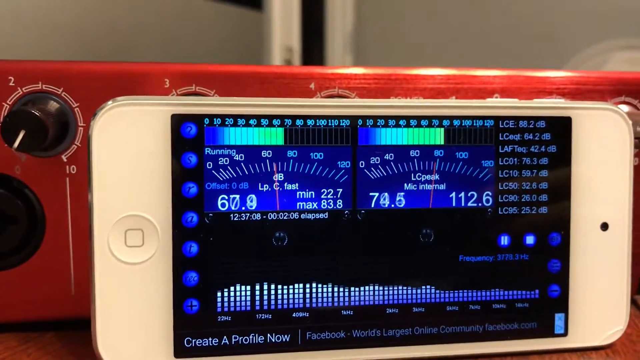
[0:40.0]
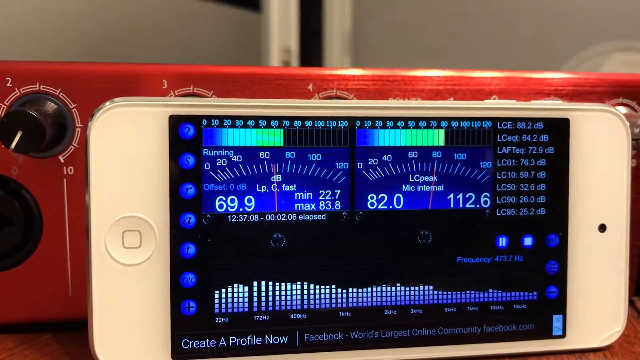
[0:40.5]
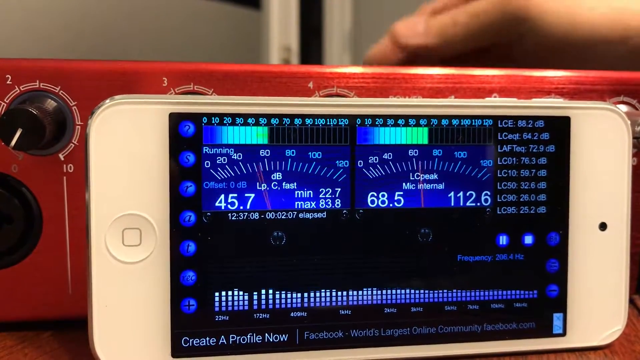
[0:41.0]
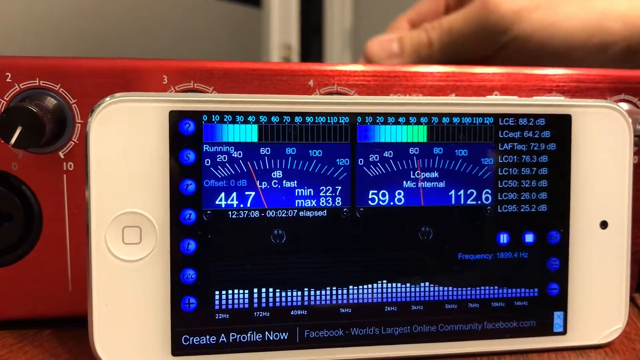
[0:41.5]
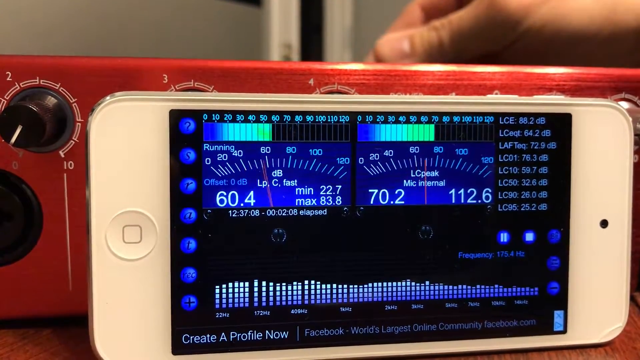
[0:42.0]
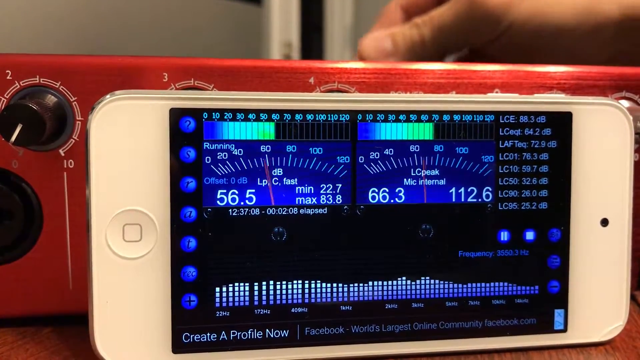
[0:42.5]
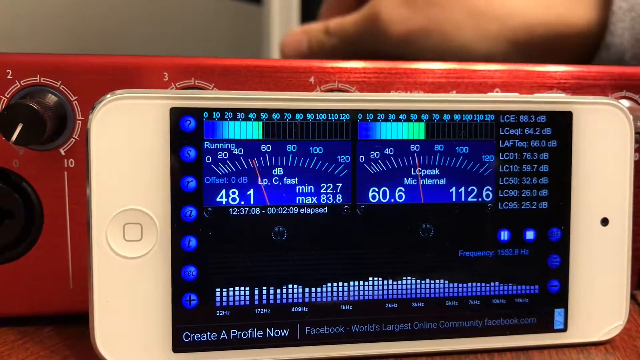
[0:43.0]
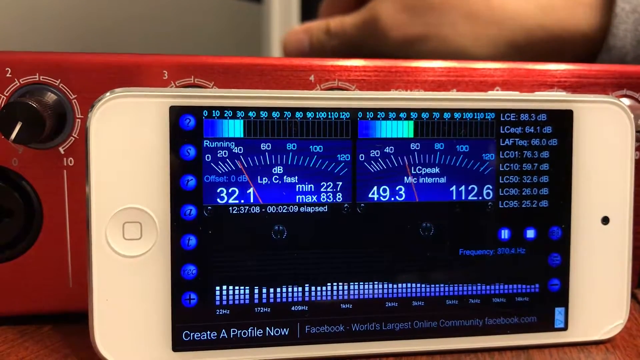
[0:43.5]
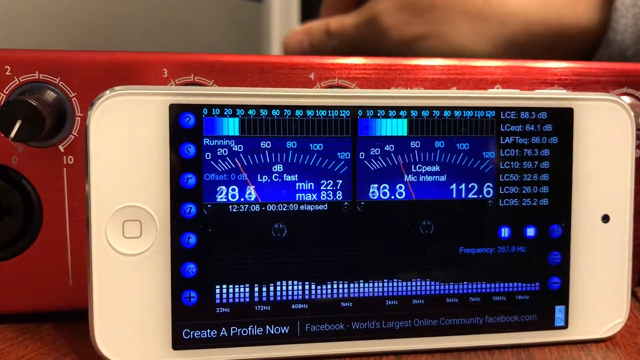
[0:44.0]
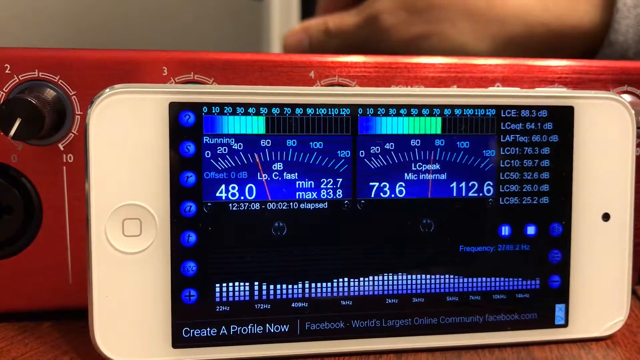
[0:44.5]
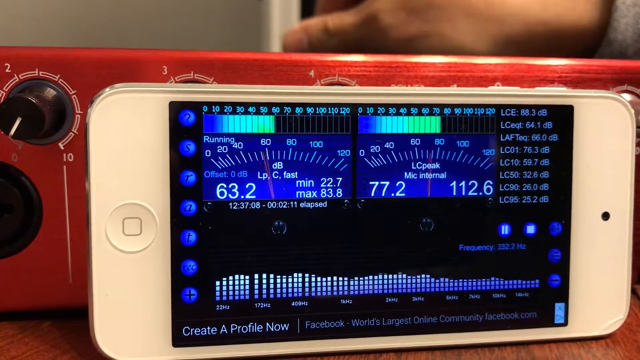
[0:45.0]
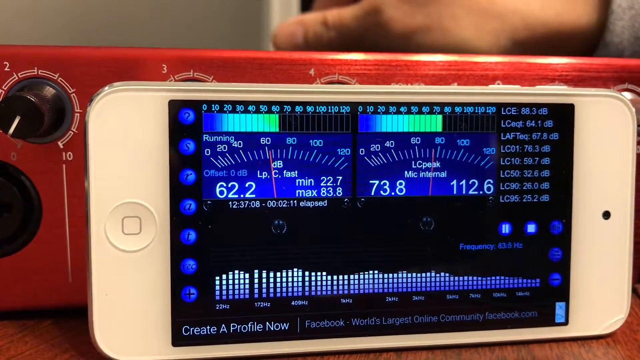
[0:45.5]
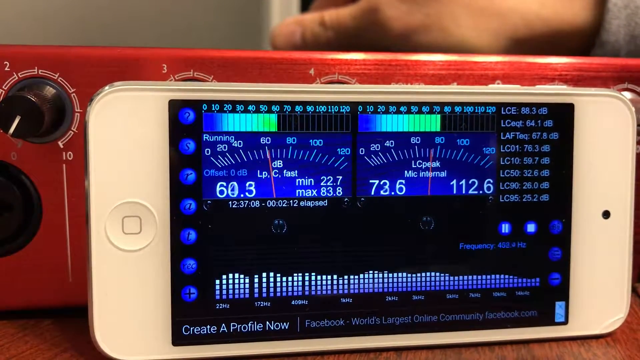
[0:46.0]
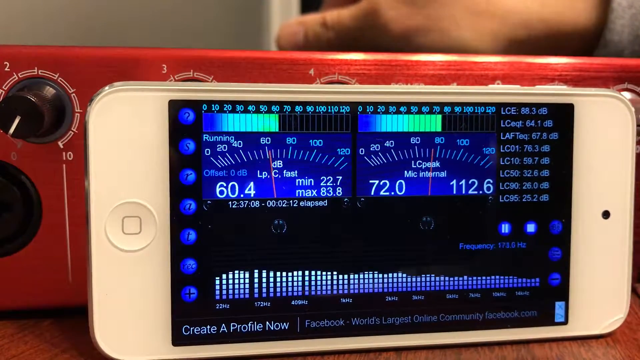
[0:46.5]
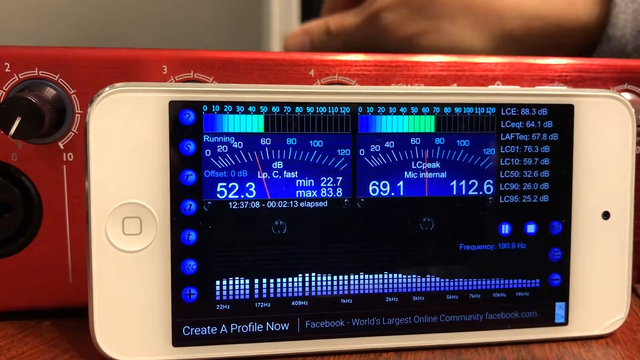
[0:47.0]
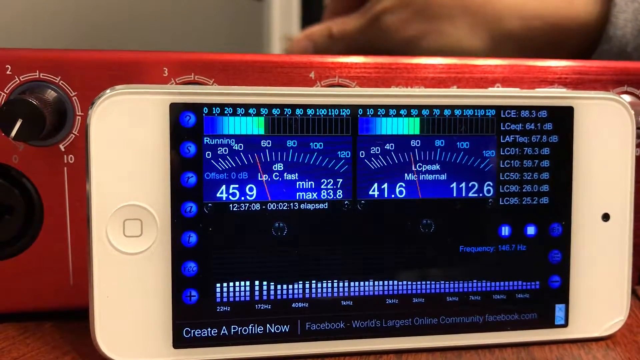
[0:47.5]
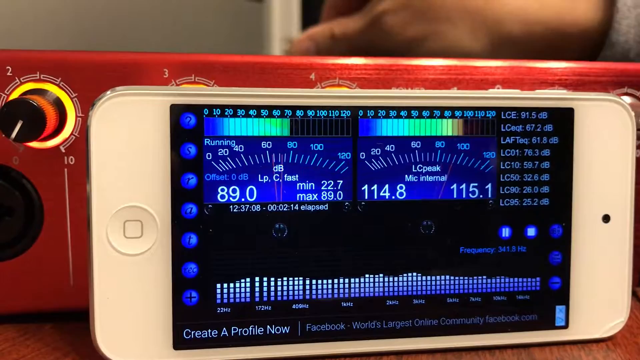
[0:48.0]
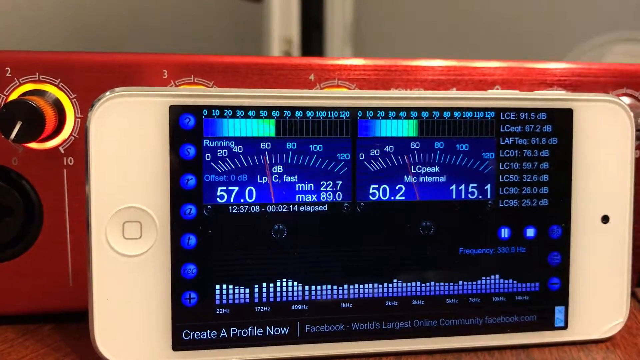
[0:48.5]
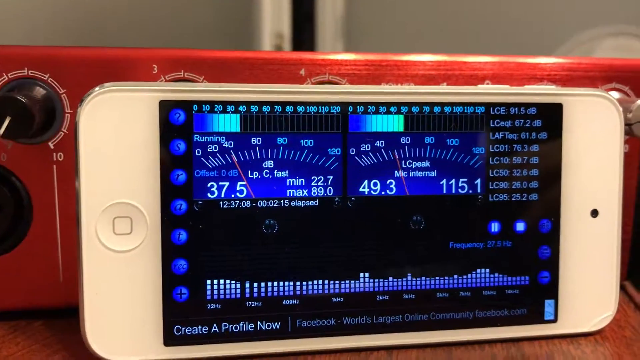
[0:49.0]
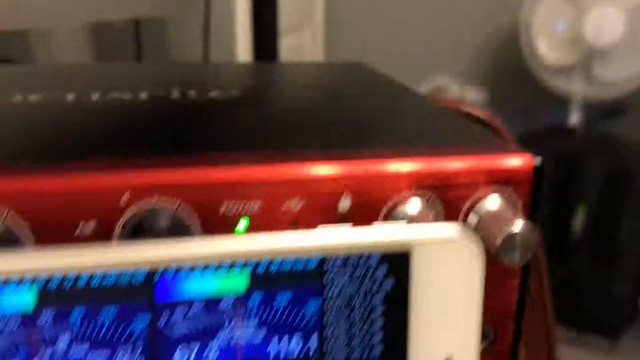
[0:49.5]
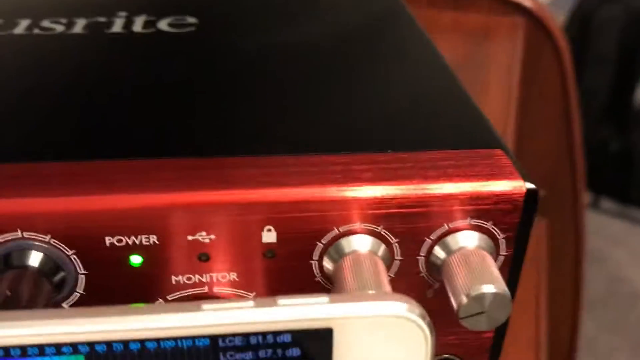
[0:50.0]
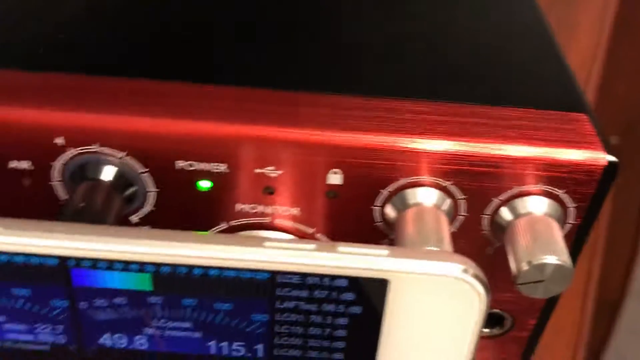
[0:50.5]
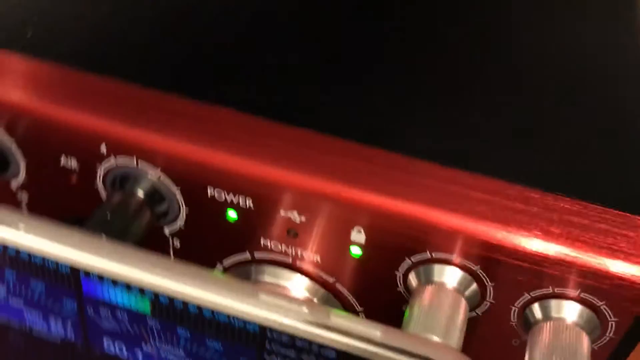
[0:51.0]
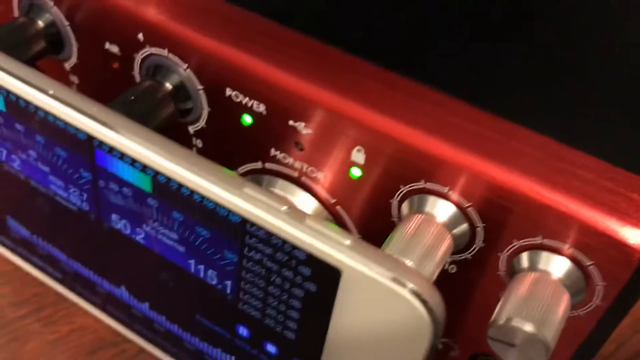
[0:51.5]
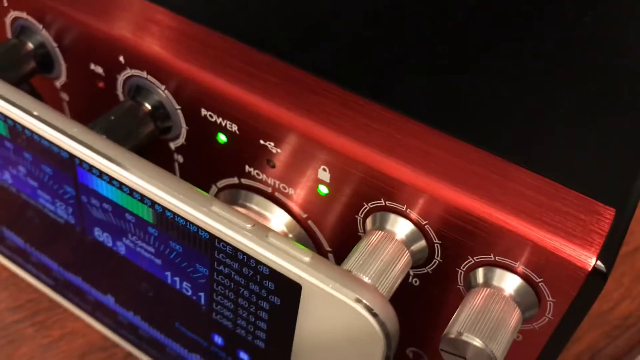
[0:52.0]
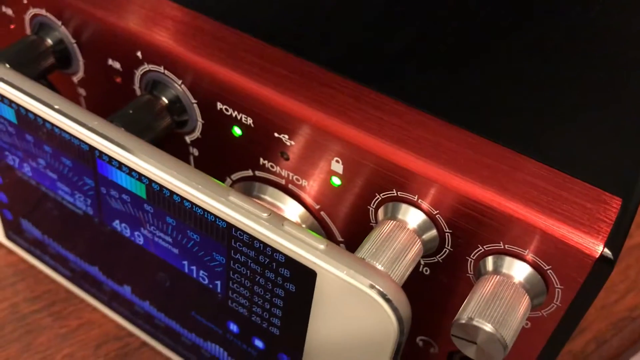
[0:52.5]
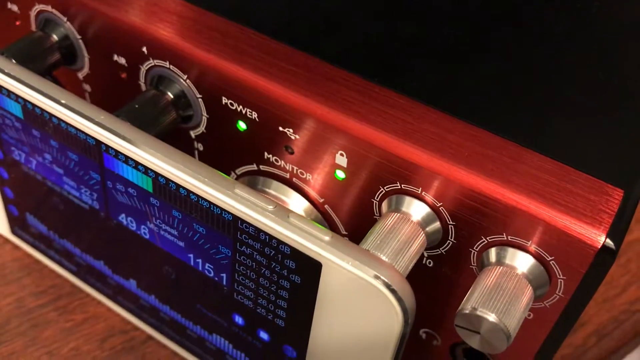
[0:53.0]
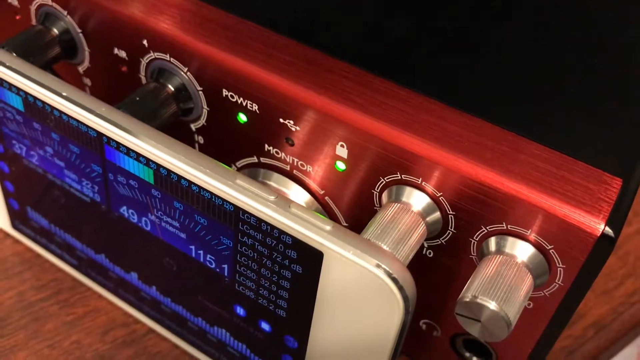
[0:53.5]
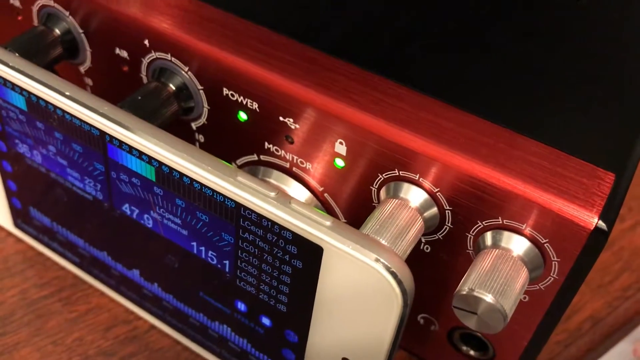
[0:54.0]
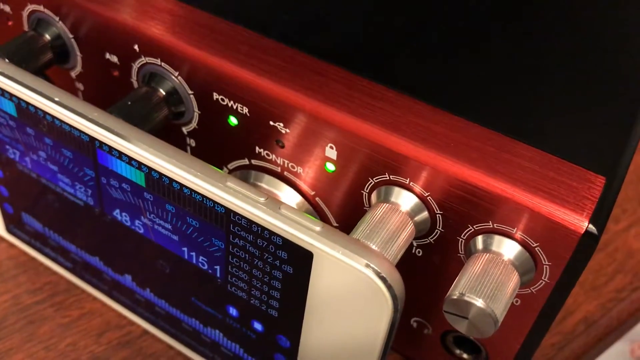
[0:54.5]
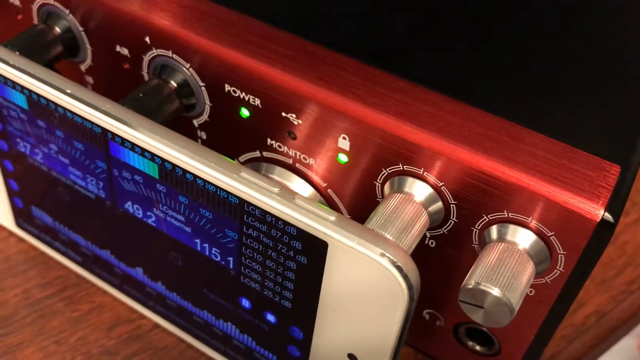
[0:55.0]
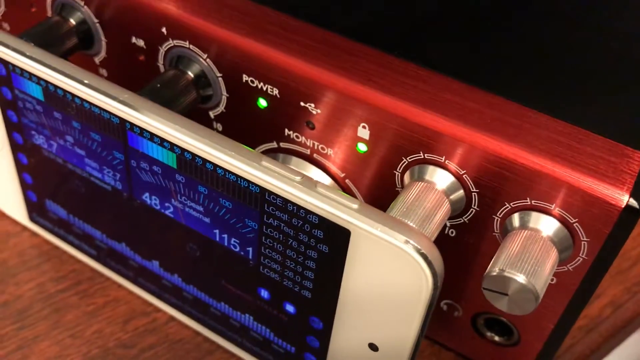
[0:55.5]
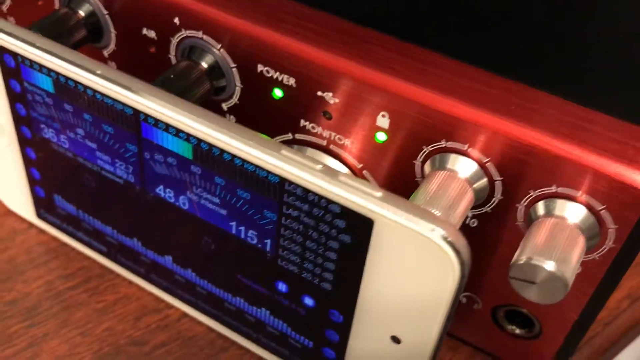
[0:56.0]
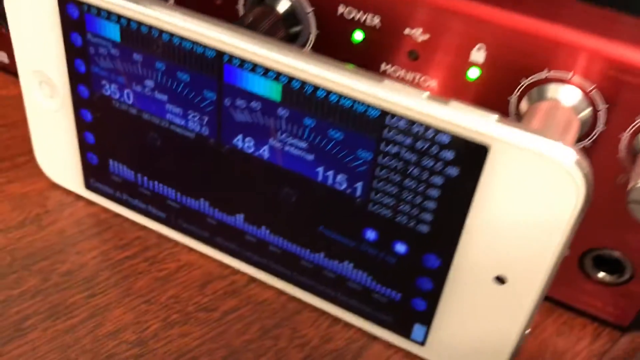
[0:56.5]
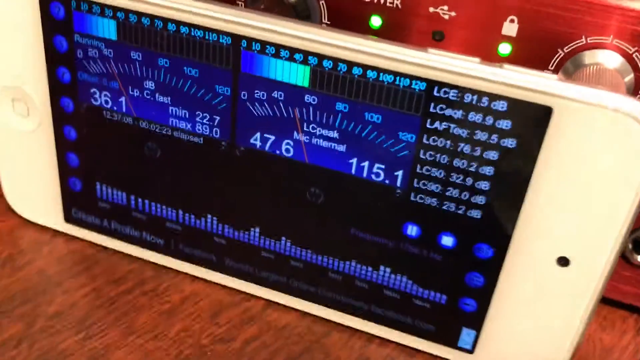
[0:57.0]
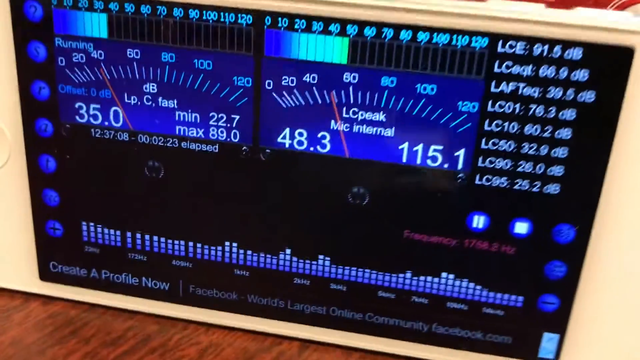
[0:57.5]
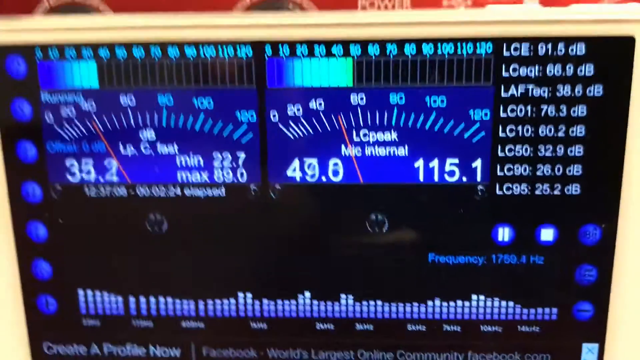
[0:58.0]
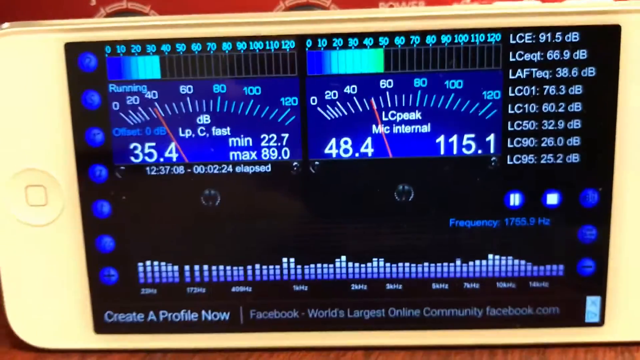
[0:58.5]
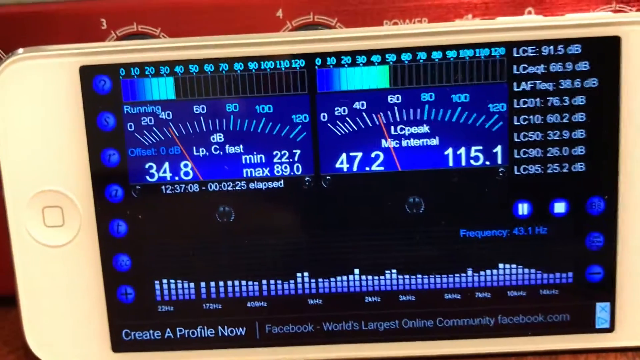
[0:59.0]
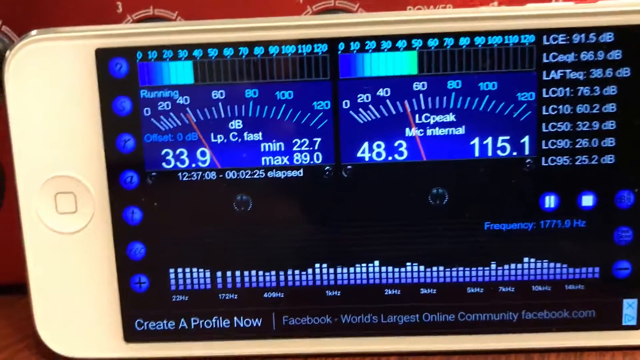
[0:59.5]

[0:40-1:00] The white, older-model iPhone runs a music app that apparently measures decibels; its arms bob up and down between 60 and 80, and slide bars at the top go up and down. A man's hand reaches behind the box behind the iPhone, a red music recording equipment box with black knobs, and he appears to switch it on. The camera zooms up to show a power button and a lock button, both green, which power on. The camera then goes back down to the shot of the iPhone. It appears that some recording or audio work is about to begin, with the audio measured on the iPhone.